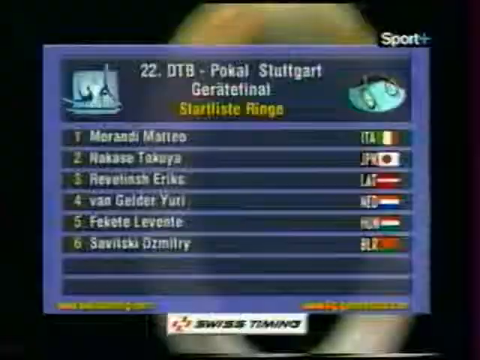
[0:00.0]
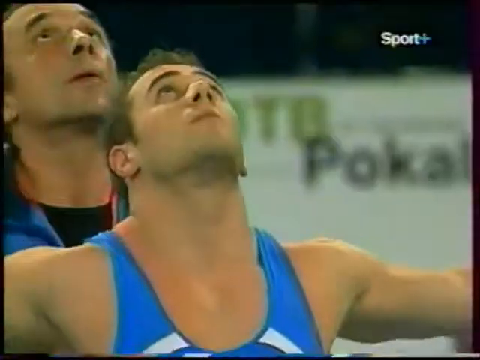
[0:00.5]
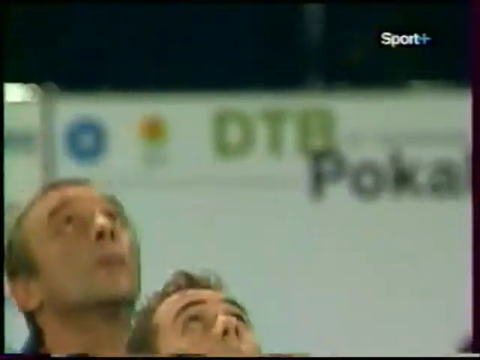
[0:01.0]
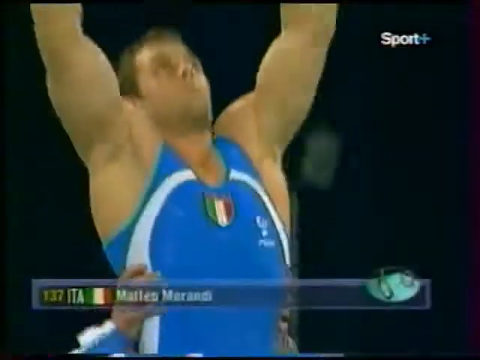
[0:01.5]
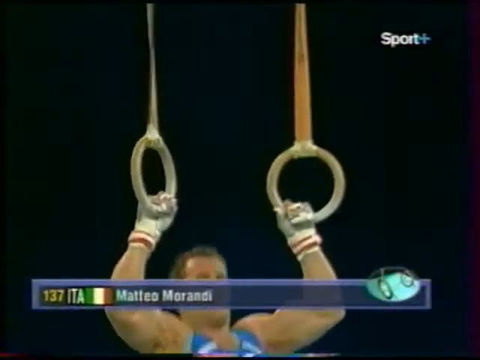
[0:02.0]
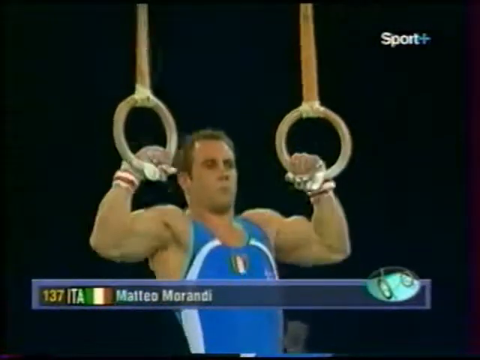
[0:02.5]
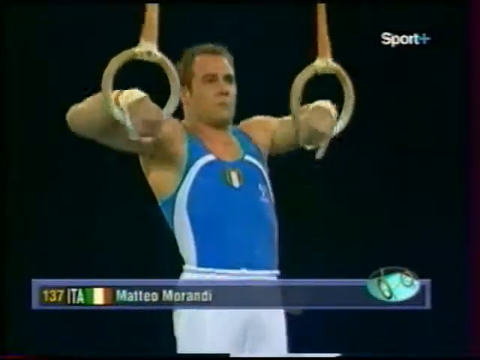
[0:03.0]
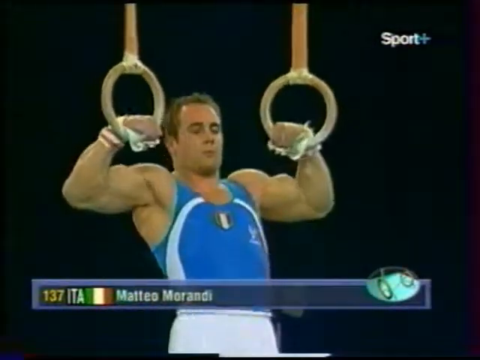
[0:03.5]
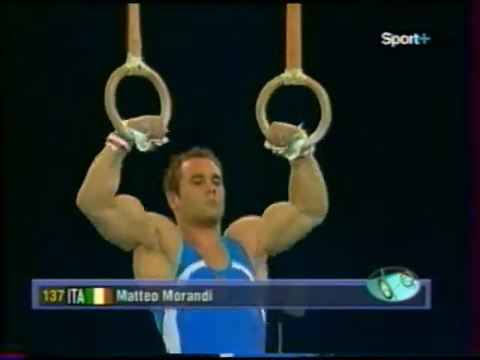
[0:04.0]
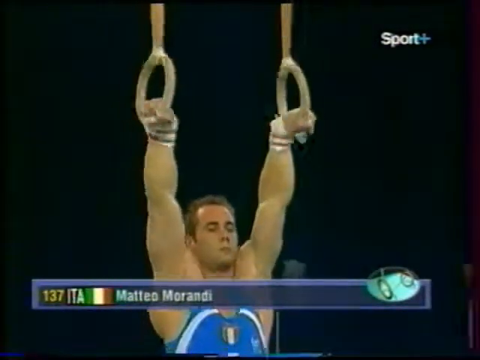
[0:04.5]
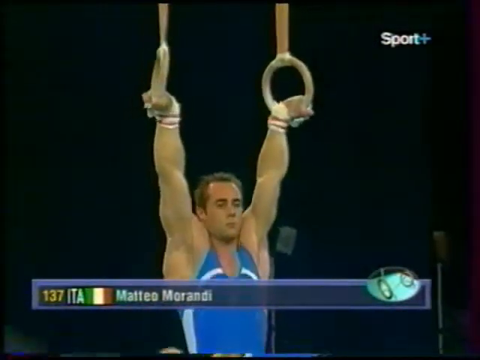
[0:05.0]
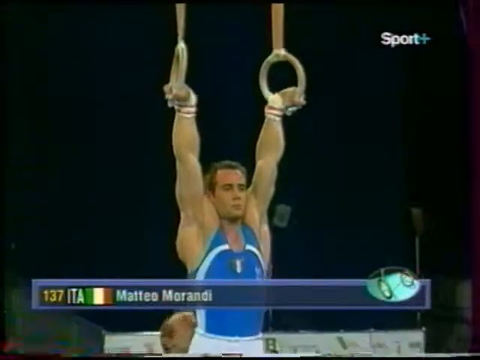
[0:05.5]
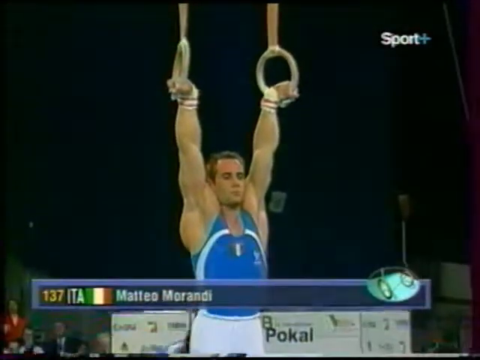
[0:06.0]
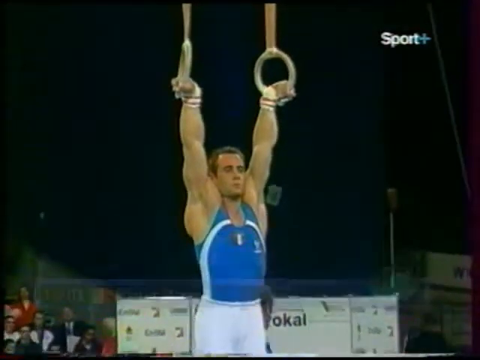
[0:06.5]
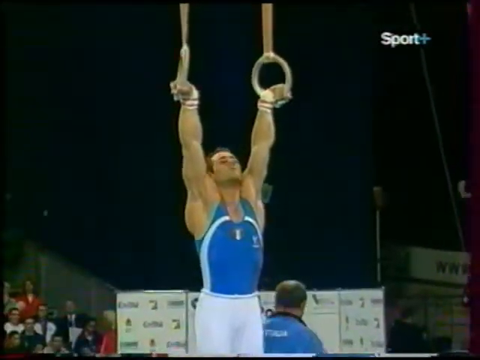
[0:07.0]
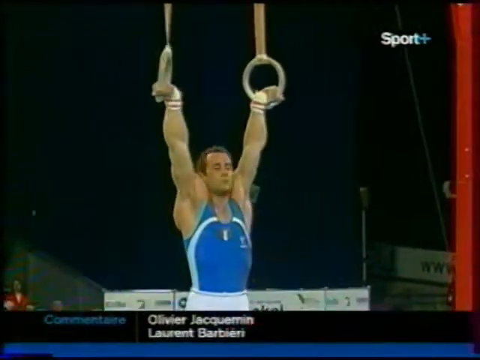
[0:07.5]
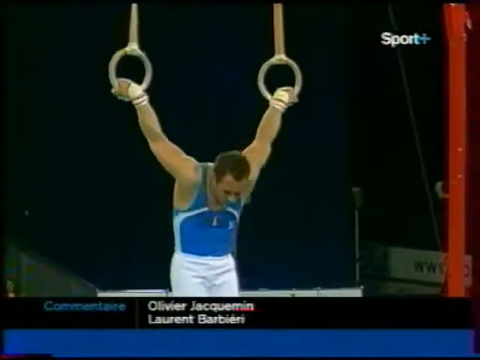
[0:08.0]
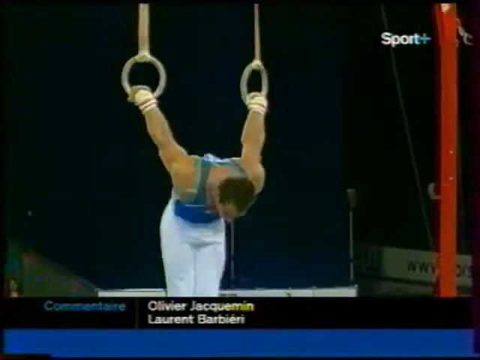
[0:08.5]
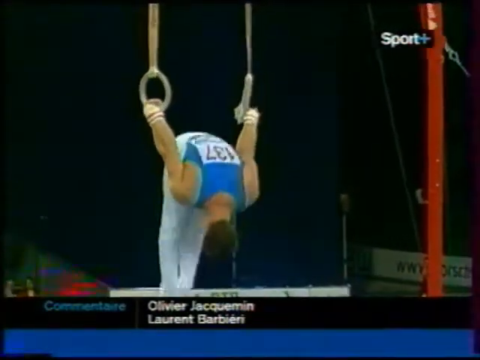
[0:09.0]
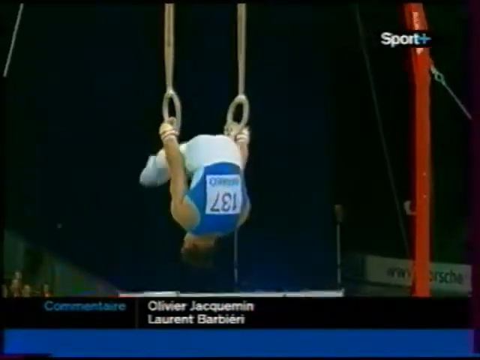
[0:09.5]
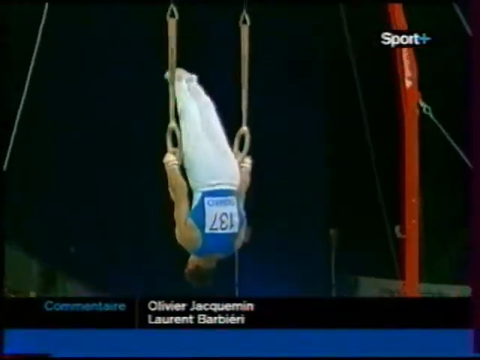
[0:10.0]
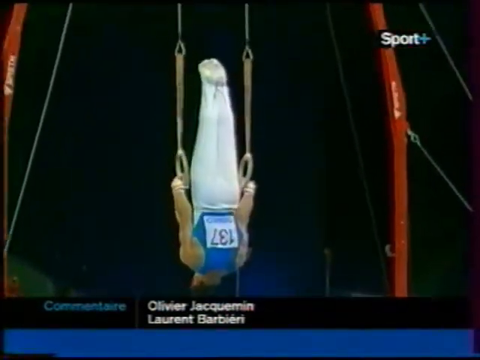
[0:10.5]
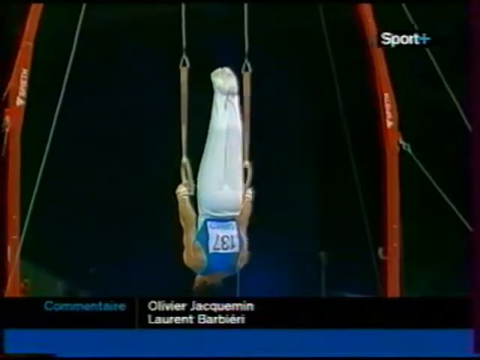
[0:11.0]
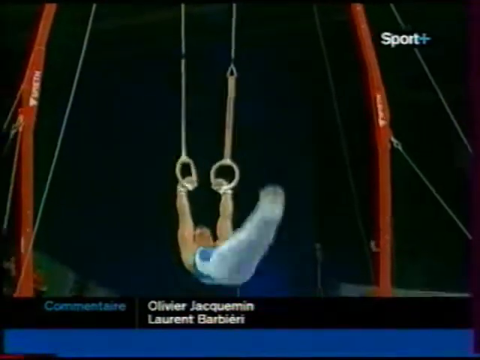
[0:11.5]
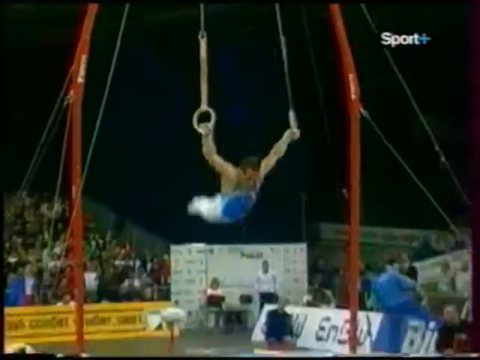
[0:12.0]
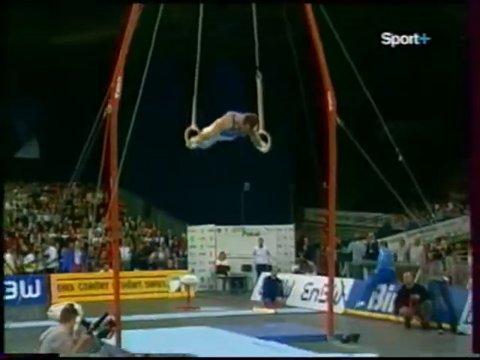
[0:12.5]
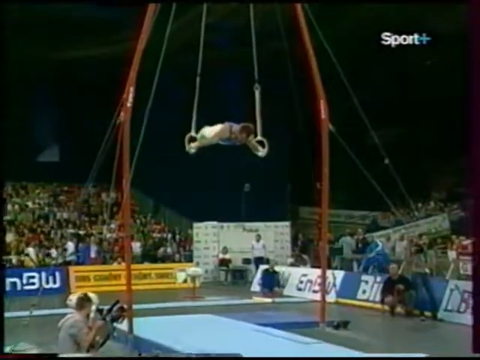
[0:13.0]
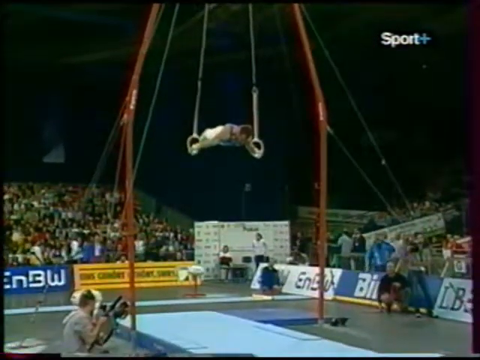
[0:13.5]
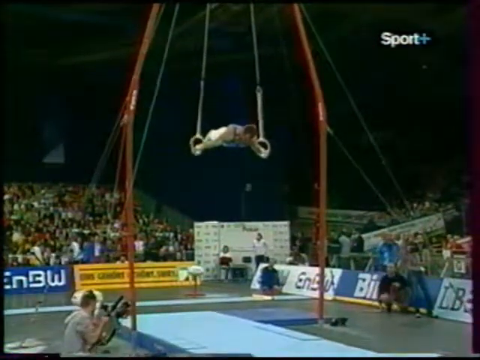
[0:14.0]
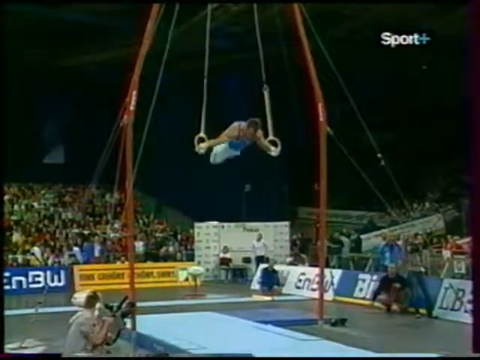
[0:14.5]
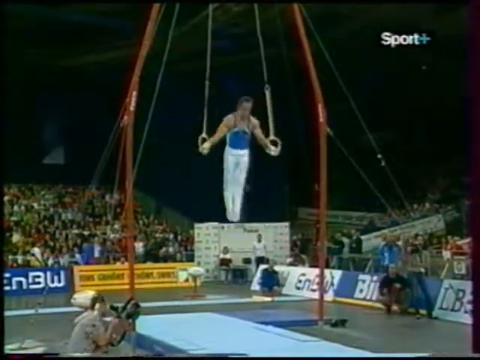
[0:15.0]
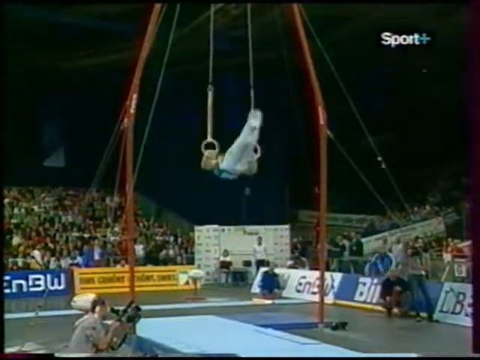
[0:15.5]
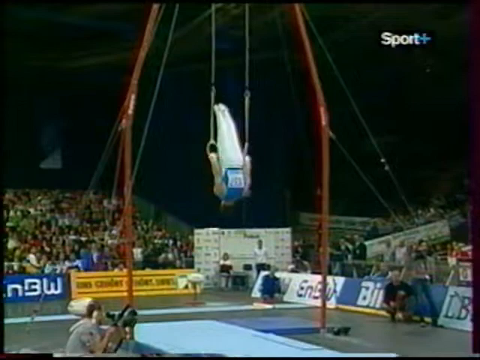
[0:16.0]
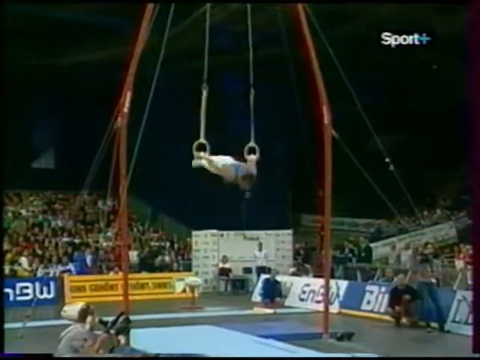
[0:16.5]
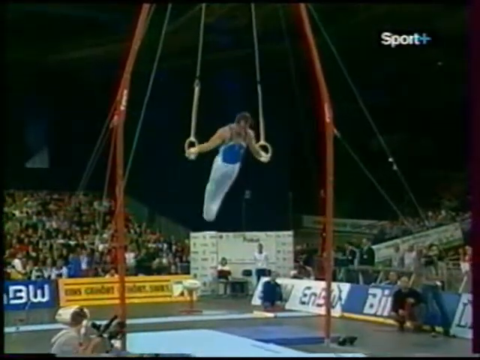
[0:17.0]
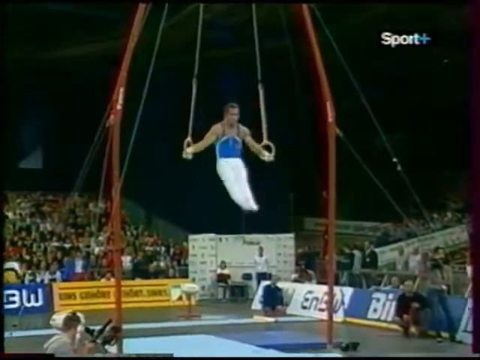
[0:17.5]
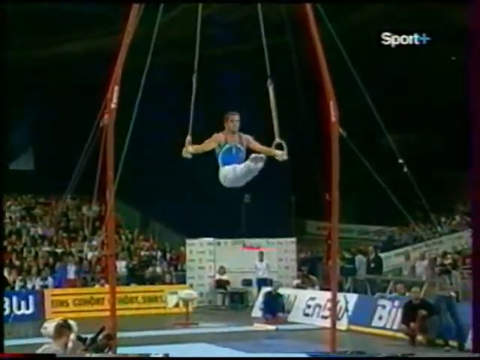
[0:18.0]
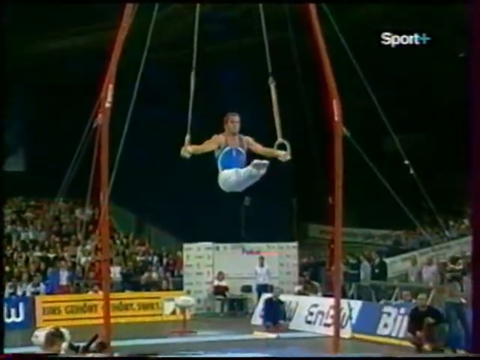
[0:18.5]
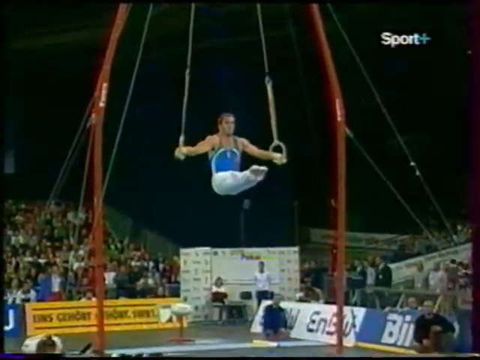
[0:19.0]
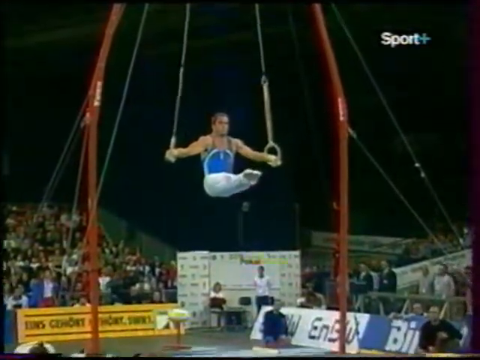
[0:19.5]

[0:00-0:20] A results chart appears on screen with "DTB POCAL Stuttgart" at the top, followed by a few other words. The numbers one through six run vertically down the left side, alongside people's names and how they ranked in the sport. Flags are shown on the right: number one is Italy, then Japan, then "Lat", then "Ned", then Hungary, and then "BLR". Next, a male gymnast with very large biceps and arm muscles is helped up onto some rings by someone. He kind of flips, slowly turning backwards, and then puts his legs out in front of him. The man is Caucasian, wears a blue tank top and has sideburns. His trapezius muscles, arm muscles and shoulders are extremely large, and everything in the arm area is very well shaped and trim.